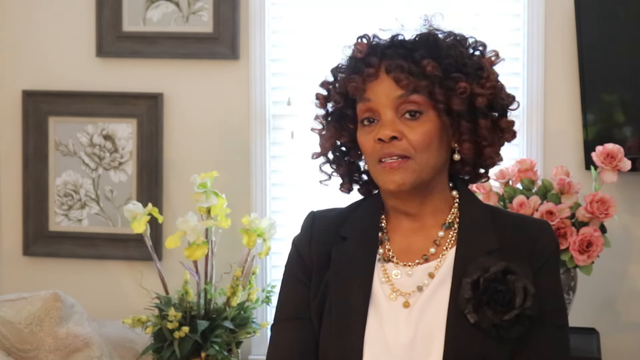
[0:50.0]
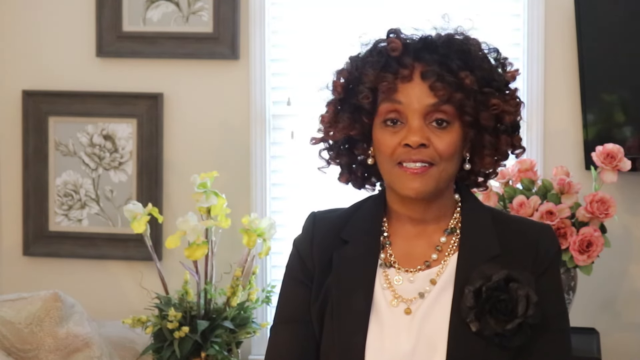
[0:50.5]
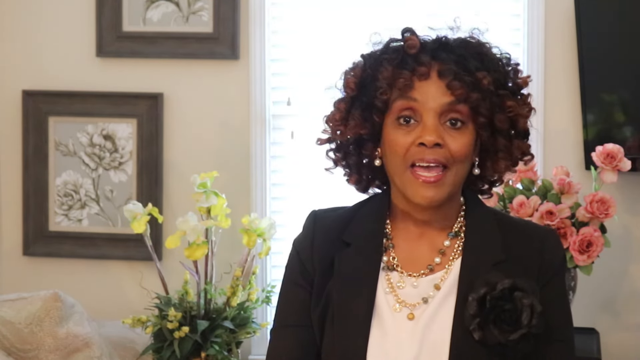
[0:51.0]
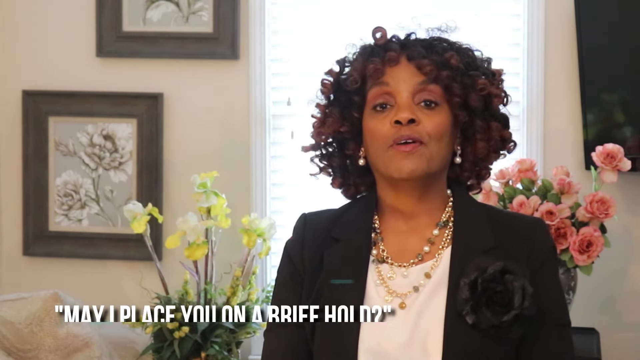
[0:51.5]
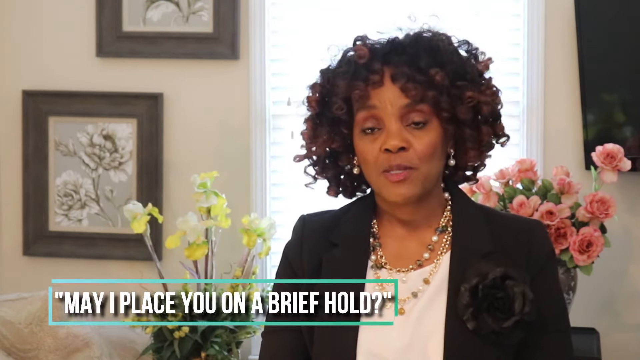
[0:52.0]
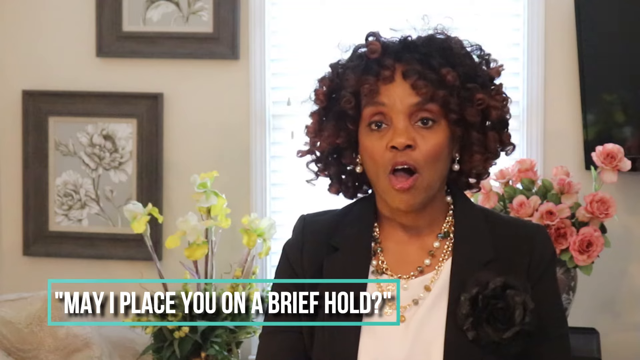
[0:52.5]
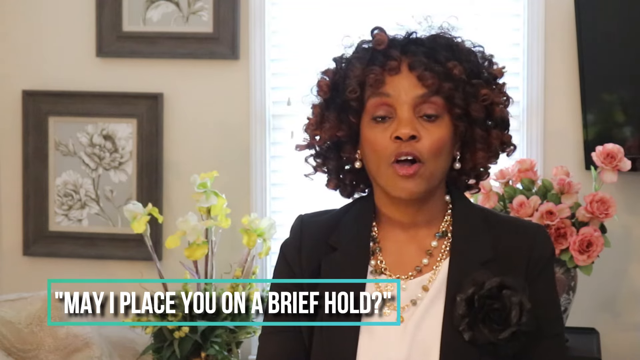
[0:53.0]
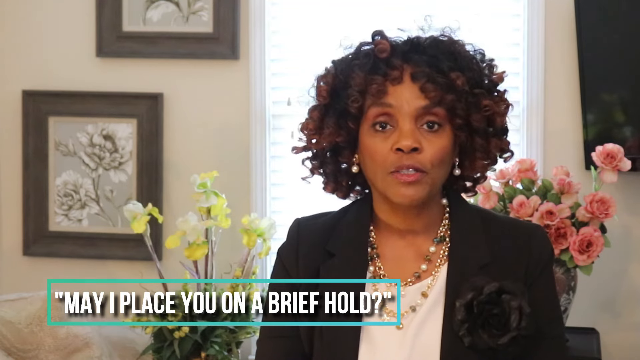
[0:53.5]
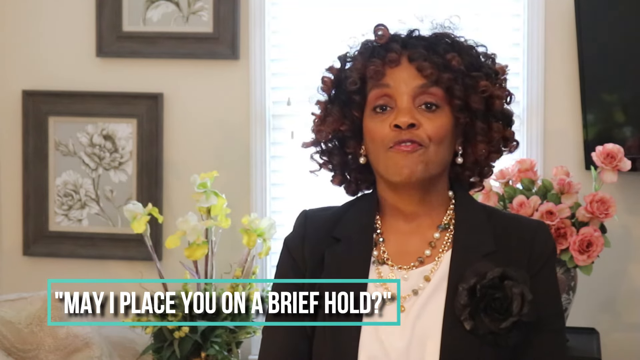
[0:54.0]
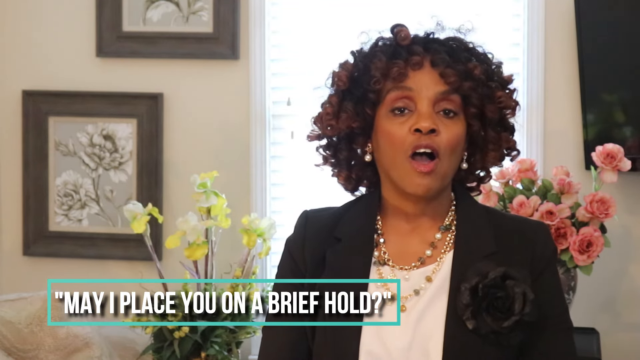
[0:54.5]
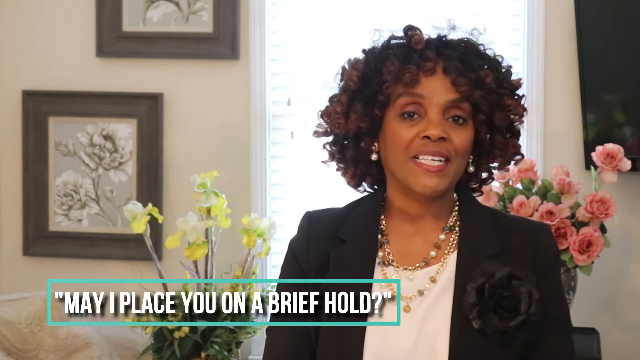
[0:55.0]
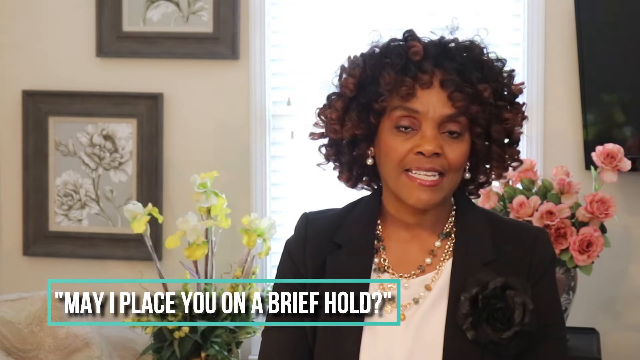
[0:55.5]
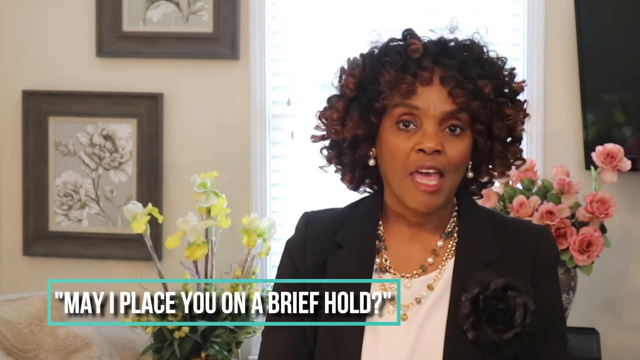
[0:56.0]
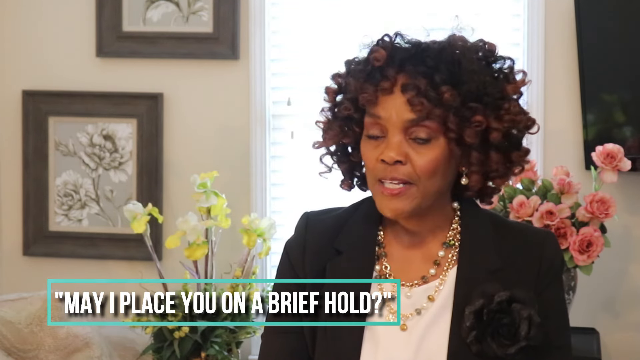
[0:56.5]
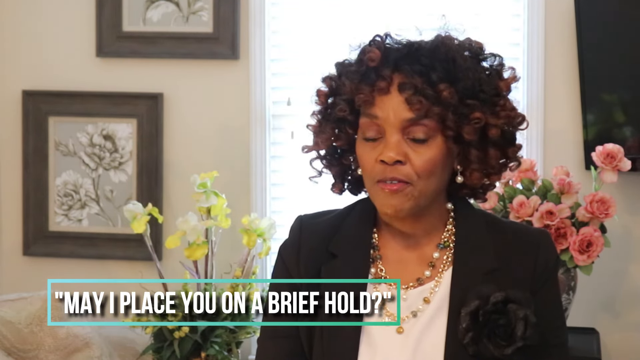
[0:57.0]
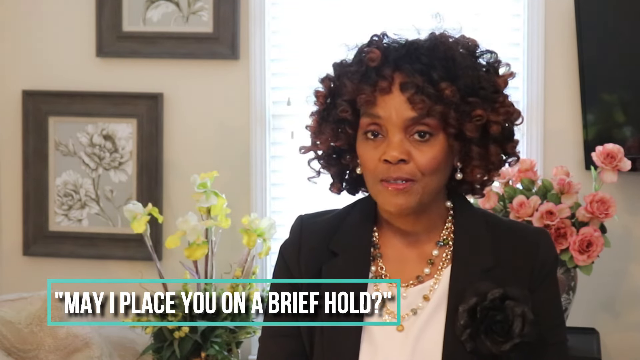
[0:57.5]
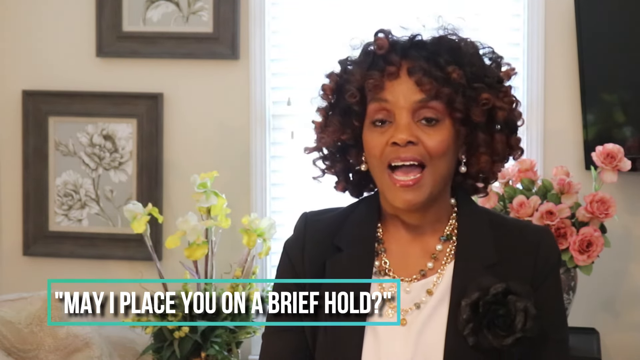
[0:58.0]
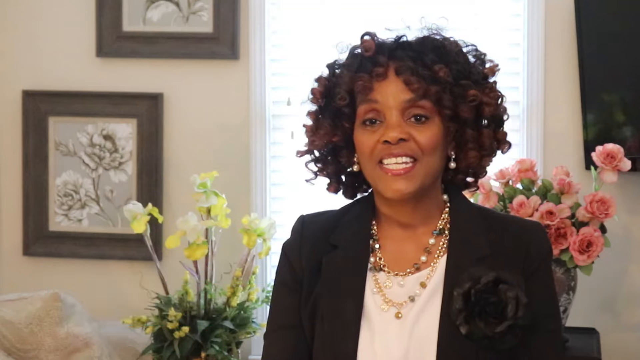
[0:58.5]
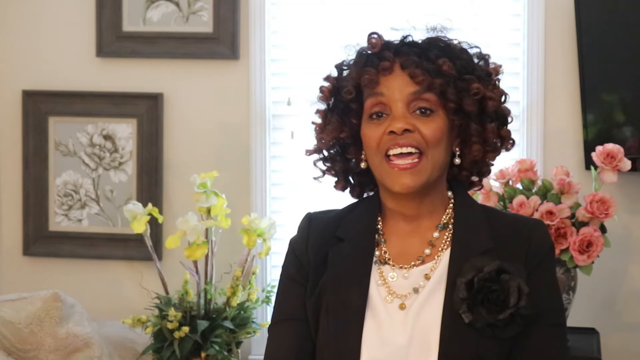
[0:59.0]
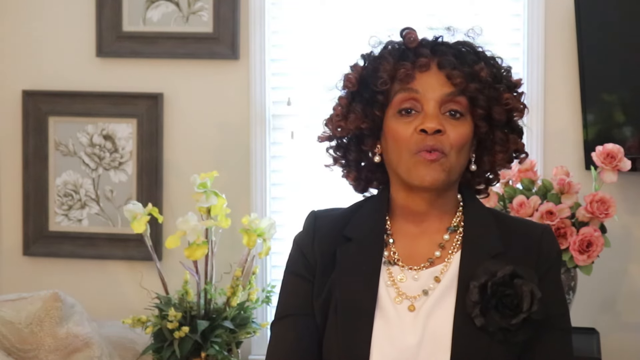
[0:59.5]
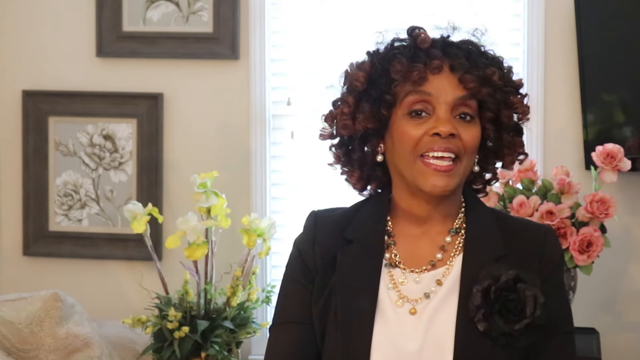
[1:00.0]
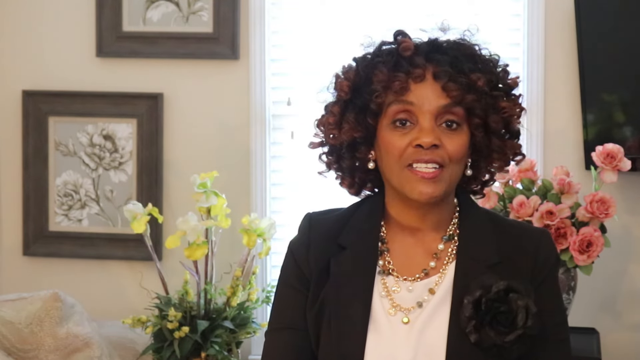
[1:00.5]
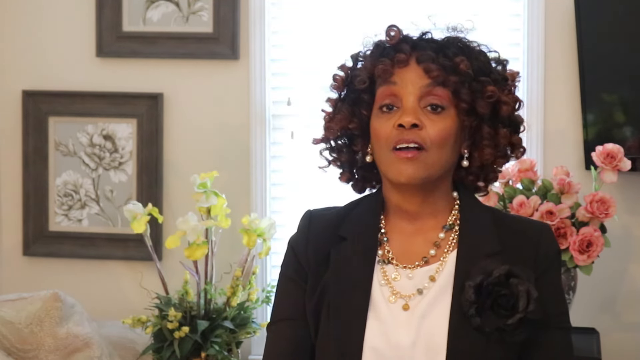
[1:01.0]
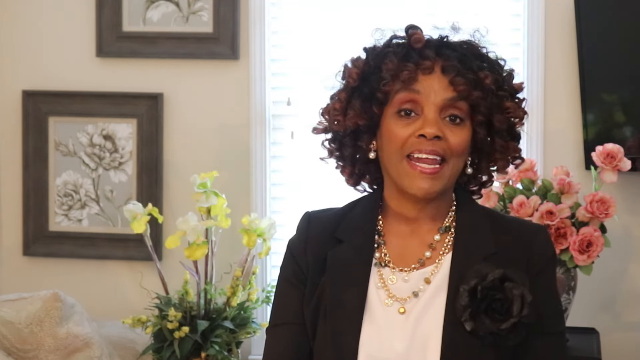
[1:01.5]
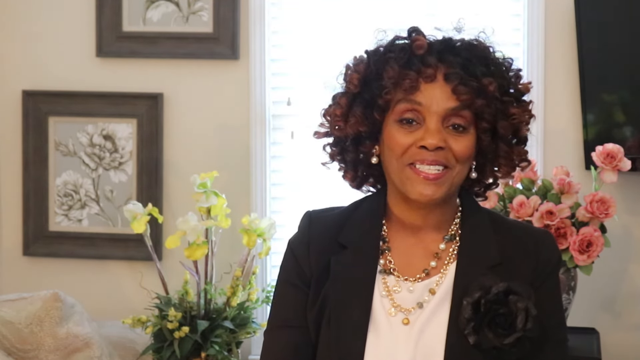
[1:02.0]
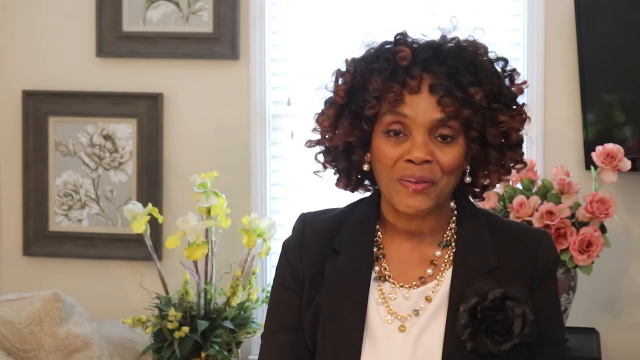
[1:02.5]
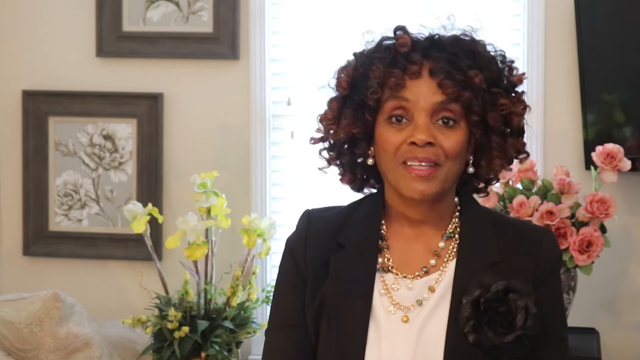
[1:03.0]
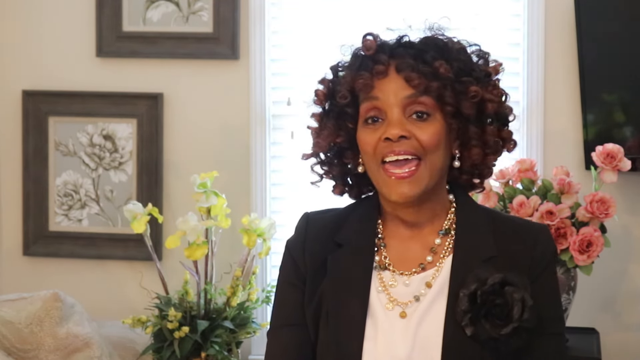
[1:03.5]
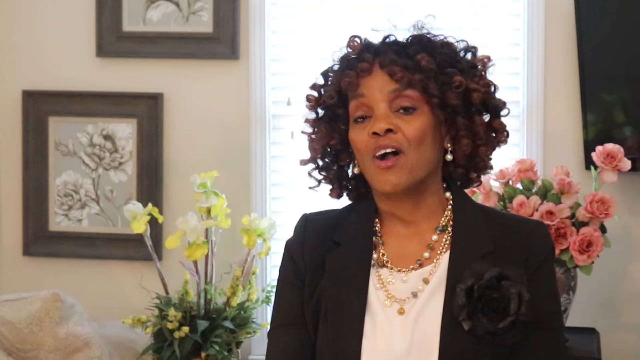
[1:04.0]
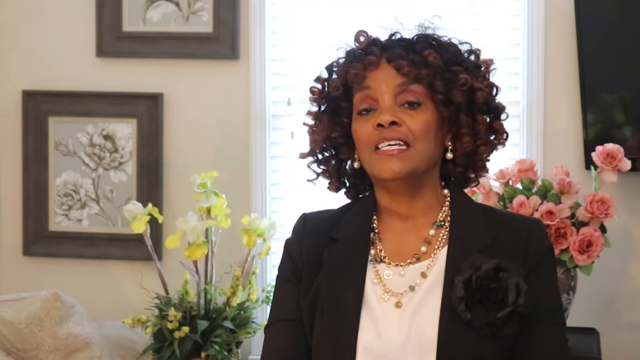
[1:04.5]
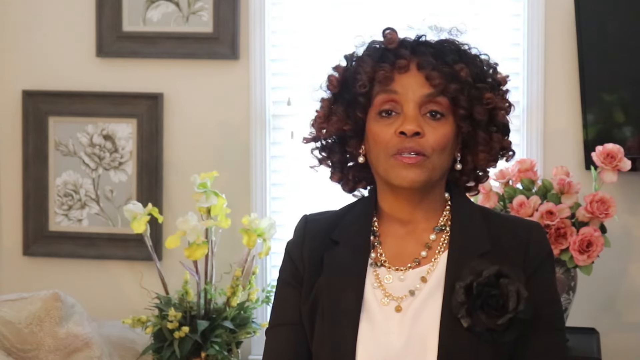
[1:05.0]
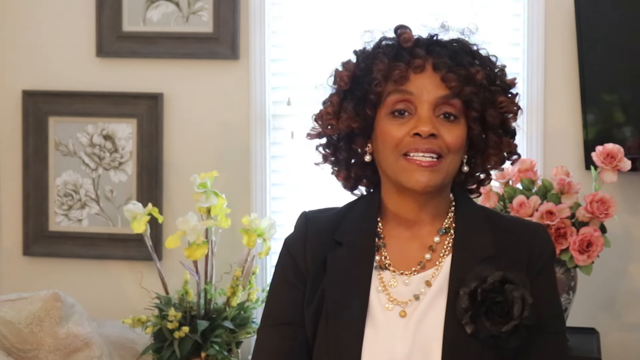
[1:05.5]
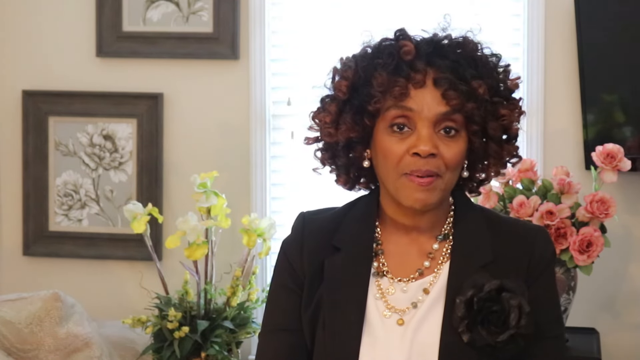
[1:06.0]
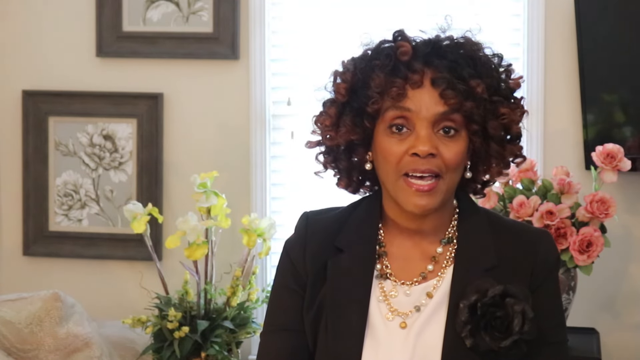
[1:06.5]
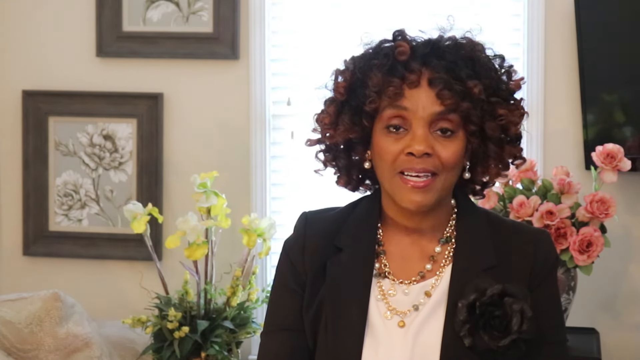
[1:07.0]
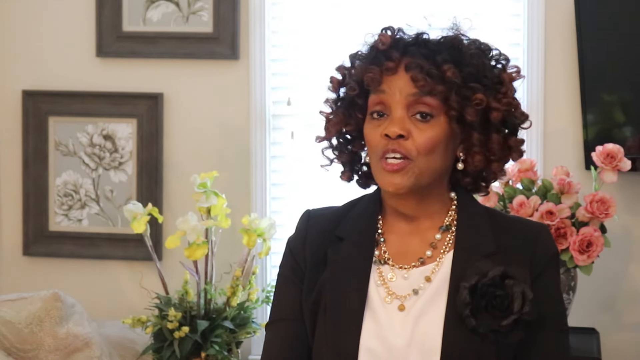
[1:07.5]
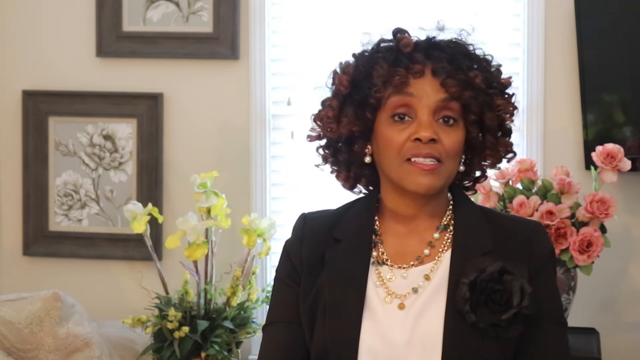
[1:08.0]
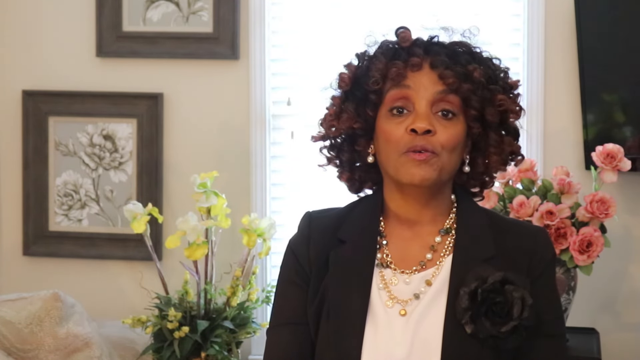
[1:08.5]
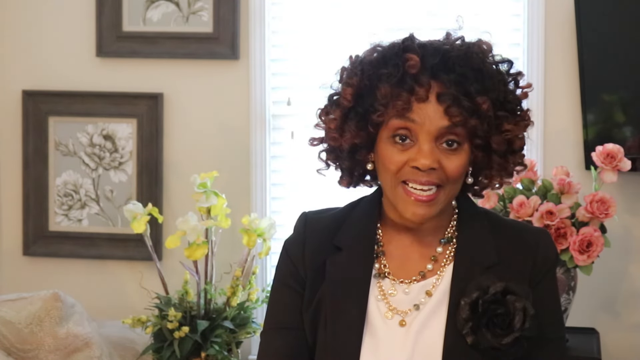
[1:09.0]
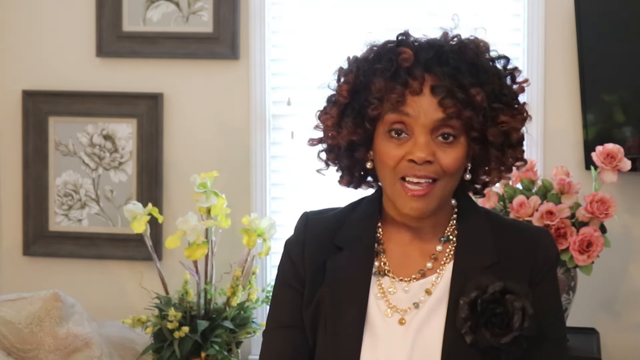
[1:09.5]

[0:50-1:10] Text appears with a phrase about placing the caller on a brief hold and "connect you," apparently among the earlier items under "sound." The woman is still smiling a lot, giving off a positive vibe. Her hair looks nice and she looks presentable.